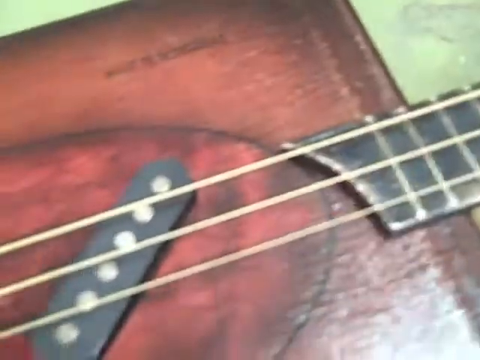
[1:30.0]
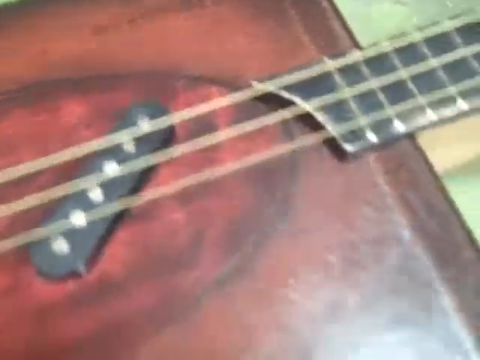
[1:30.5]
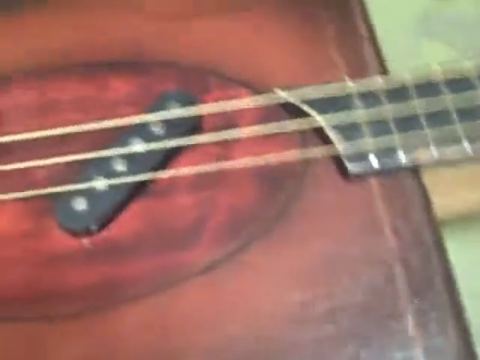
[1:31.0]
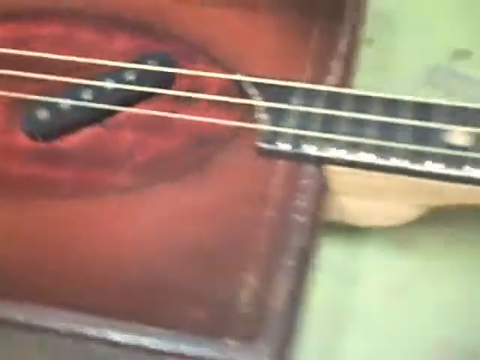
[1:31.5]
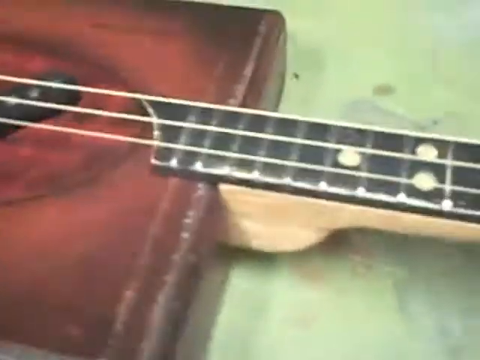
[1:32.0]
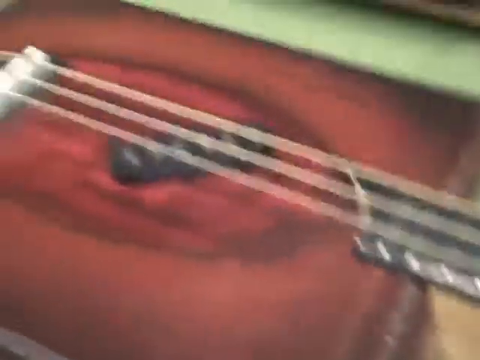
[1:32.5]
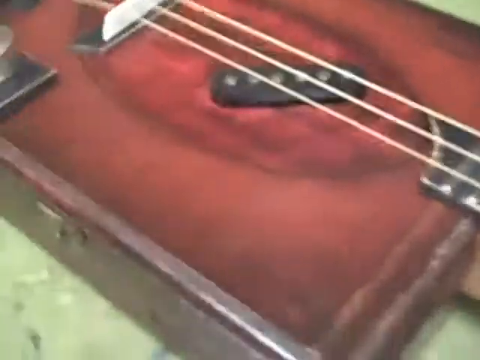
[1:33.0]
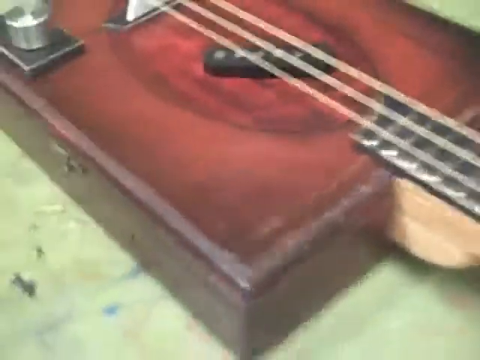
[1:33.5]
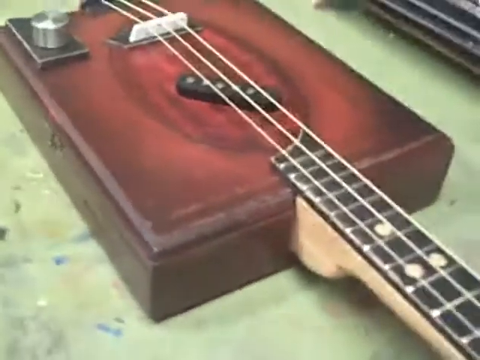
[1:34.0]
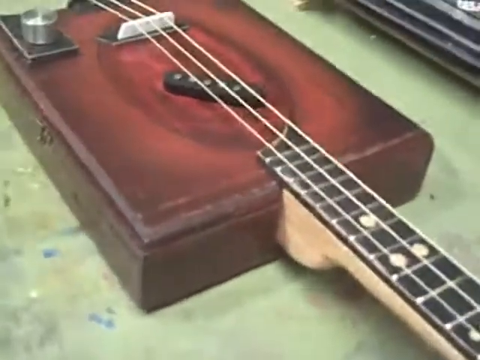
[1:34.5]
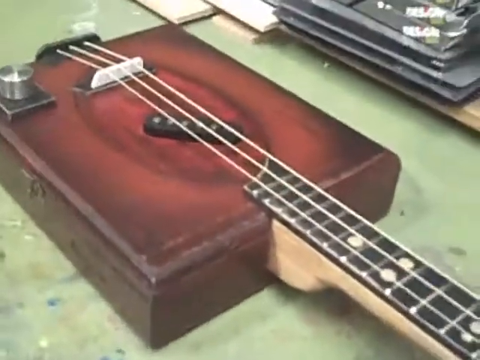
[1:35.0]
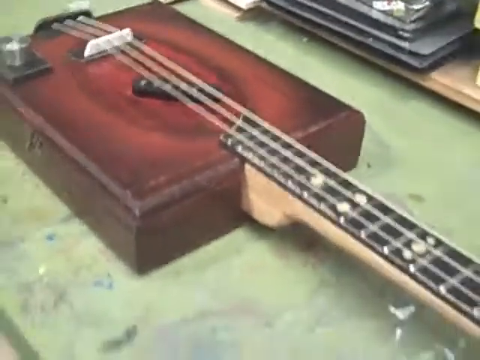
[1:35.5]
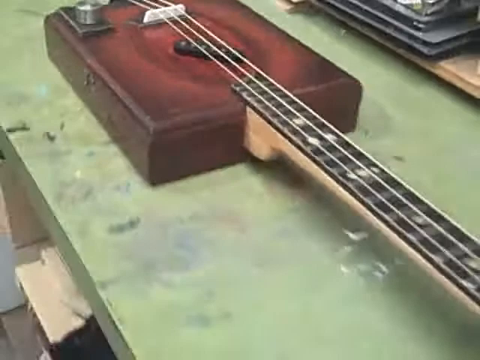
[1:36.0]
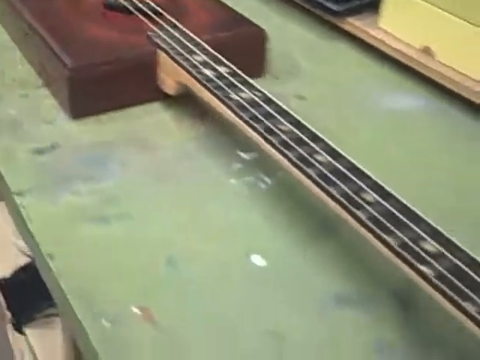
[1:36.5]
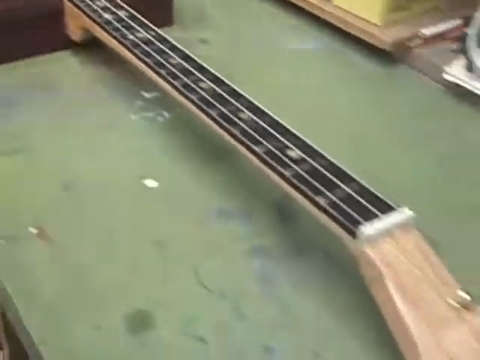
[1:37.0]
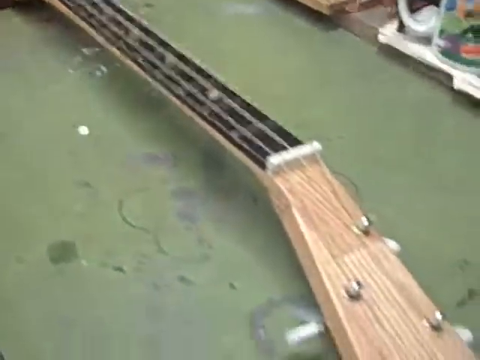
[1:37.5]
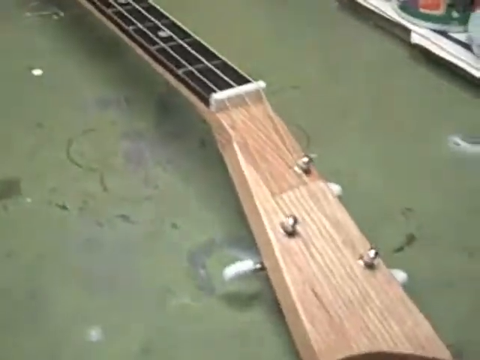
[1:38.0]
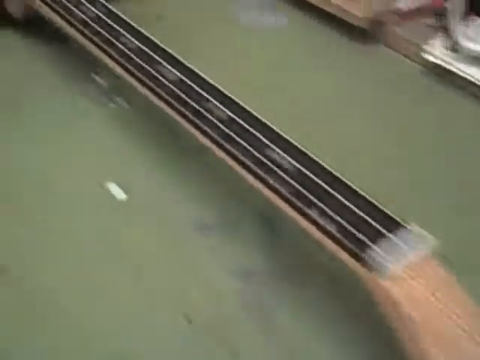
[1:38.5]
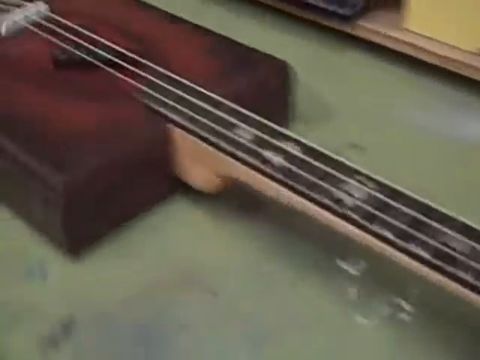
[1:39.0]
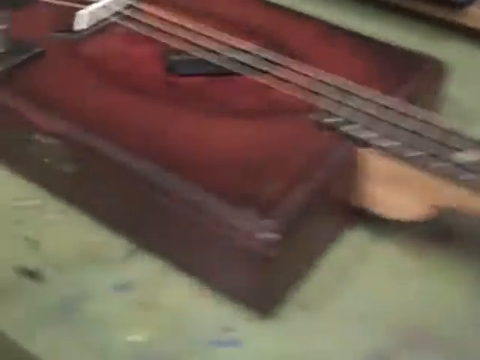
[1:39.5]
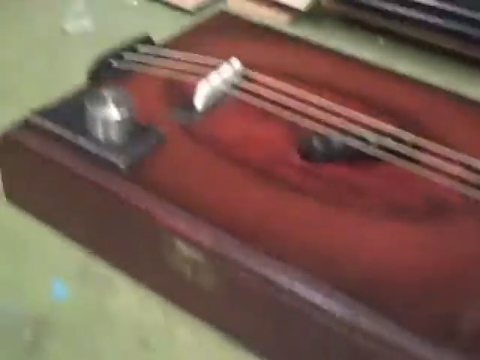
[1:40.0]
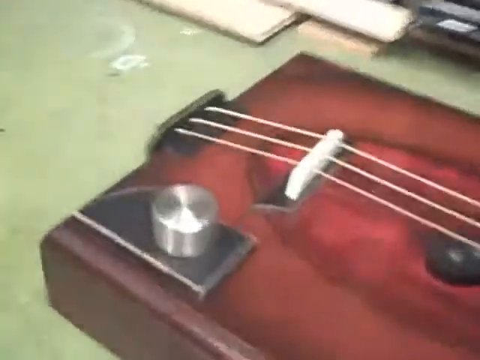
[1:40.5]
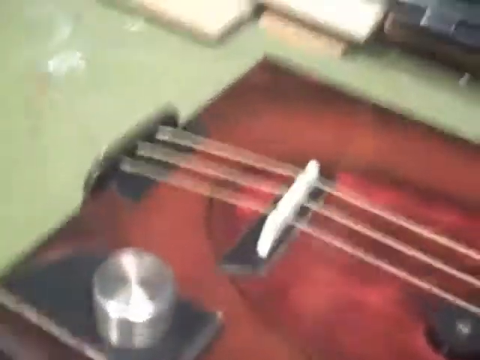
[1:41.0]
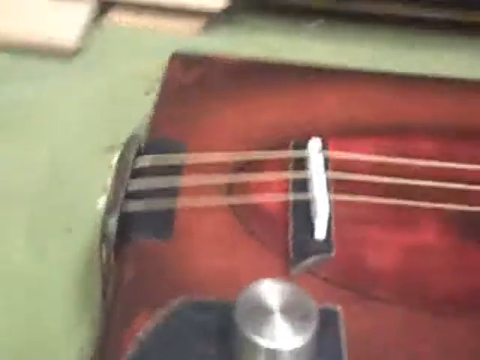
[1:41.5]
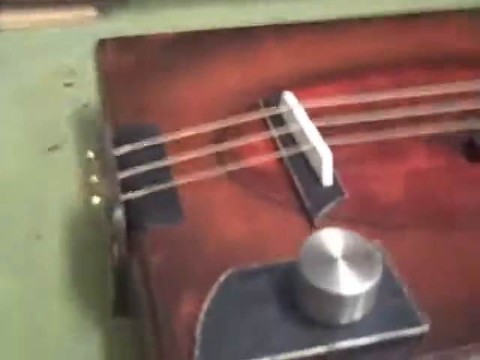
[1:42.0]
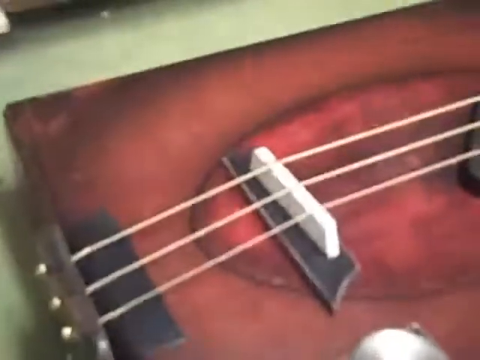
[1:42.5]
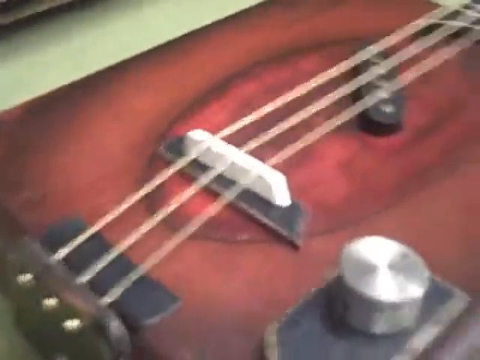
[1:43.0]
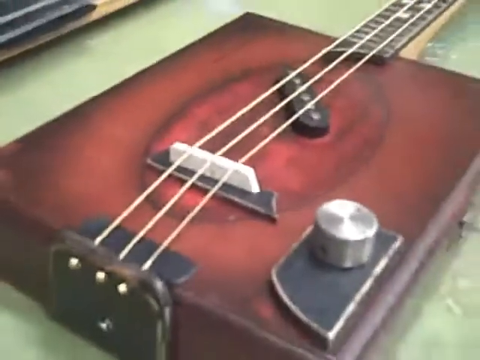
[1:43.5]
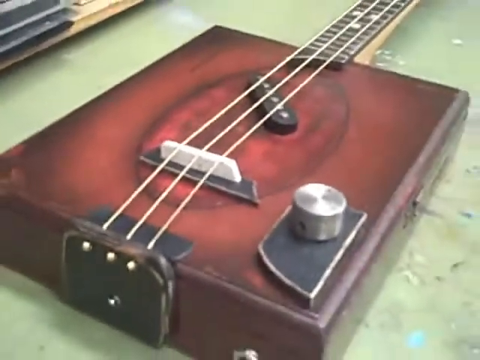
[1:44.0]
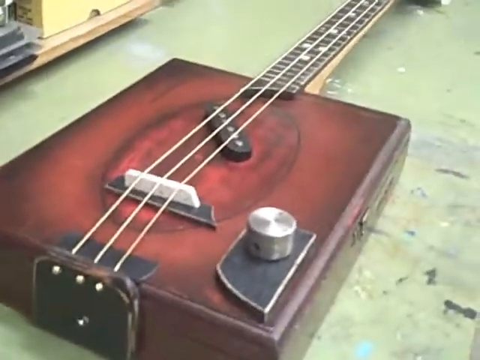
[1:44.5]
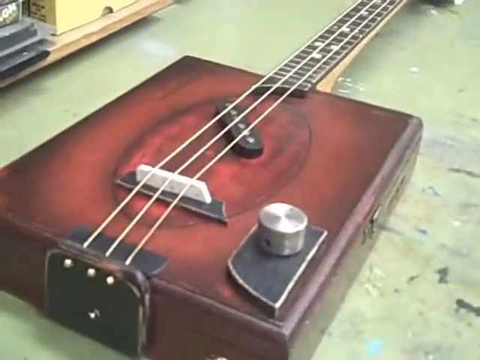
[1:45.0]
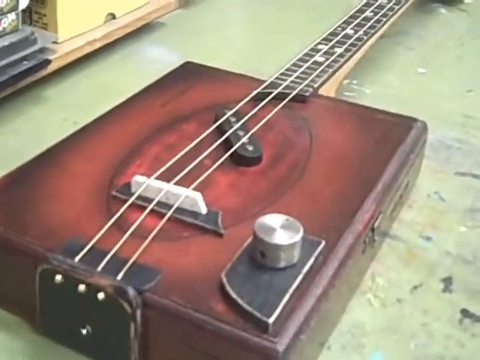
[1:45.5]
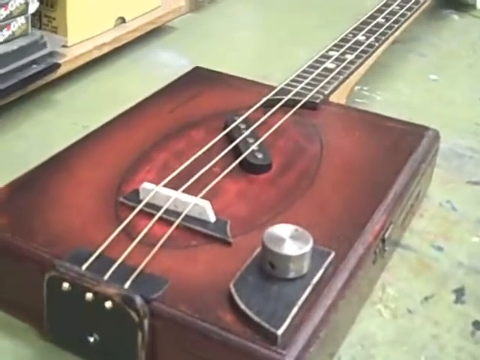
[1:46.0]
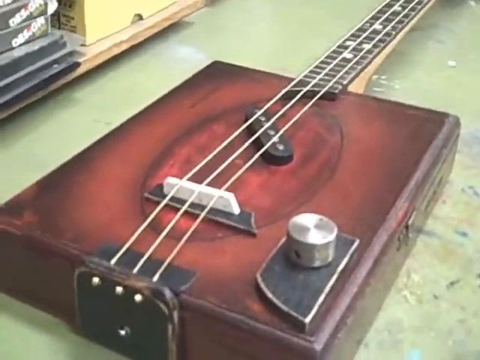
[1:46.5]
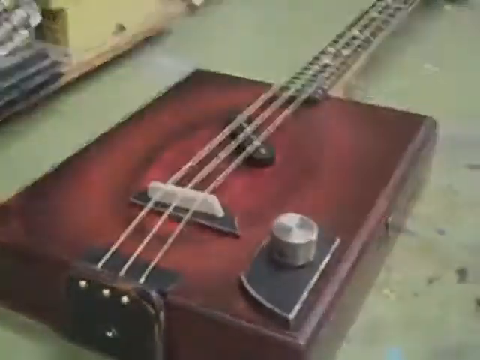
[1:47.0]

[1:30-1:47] The camera zooms out and gives a full view of the guitar, which is possibly homemade since it does not look like a conventional or store-bought guitar; many elements are missing, especially the hole in the middle. It is a red wooden guitar with a black handle that has gold lines on it, and gold strings. There is a small piece of black wood in the middle and one at the bottom right corner, with a silver knob on top of the black piece at the bottom right corner. The guitar is on a green table, with a lot of stuff lying around, such as wooden things, a ruler and many other things. The person zooms out and shows every detail of the guitar from the handle all the way down to the bottom.